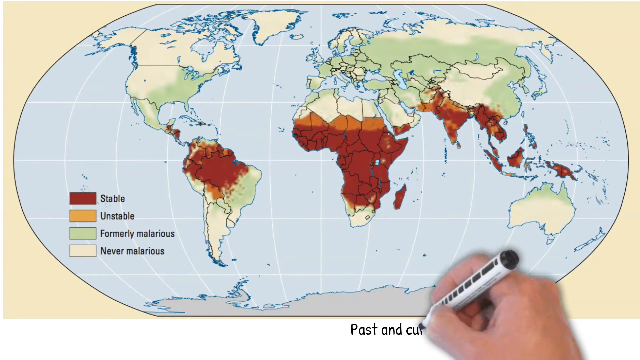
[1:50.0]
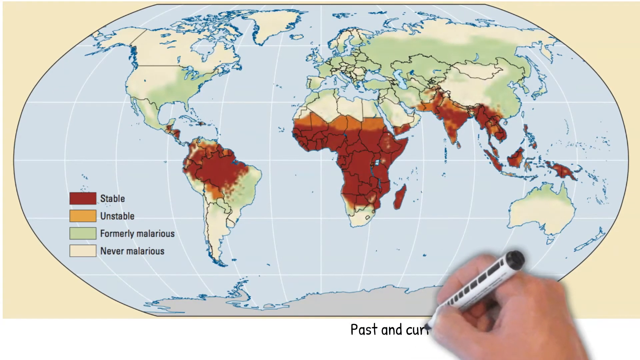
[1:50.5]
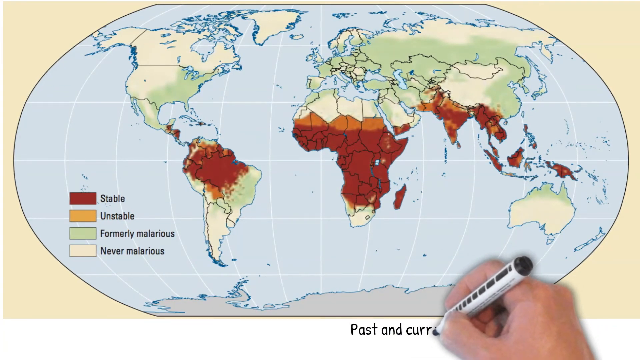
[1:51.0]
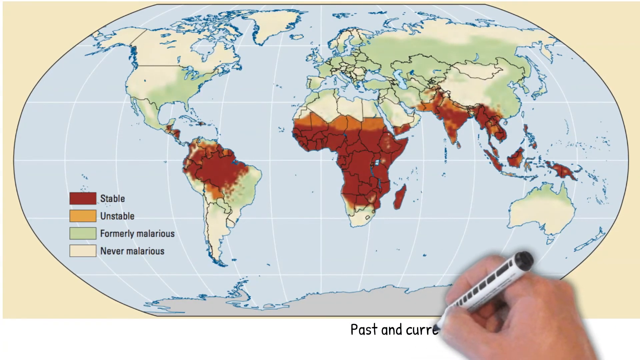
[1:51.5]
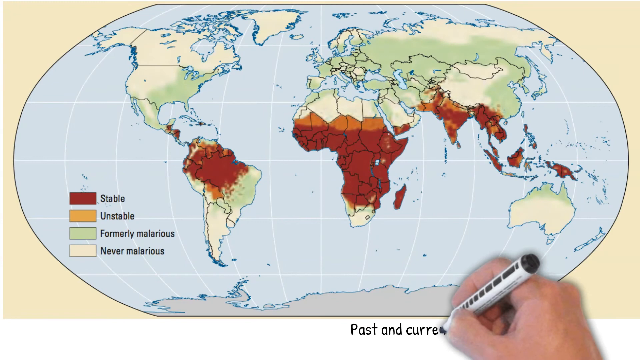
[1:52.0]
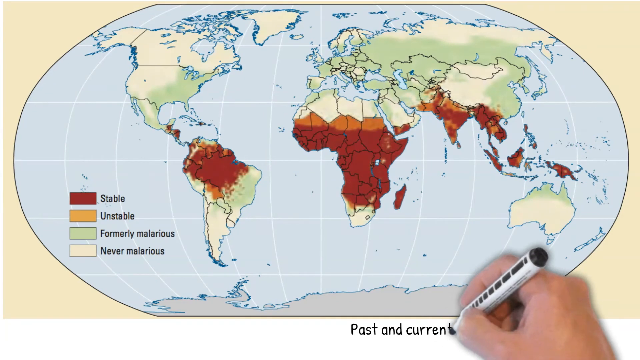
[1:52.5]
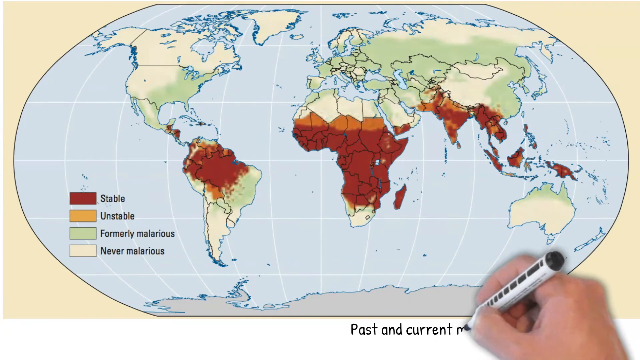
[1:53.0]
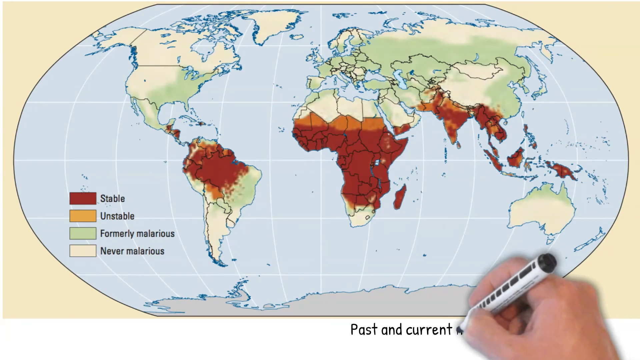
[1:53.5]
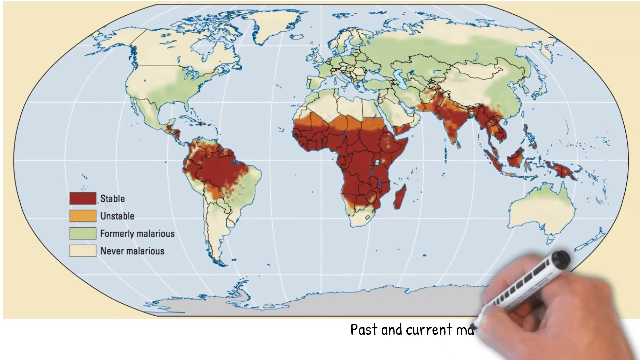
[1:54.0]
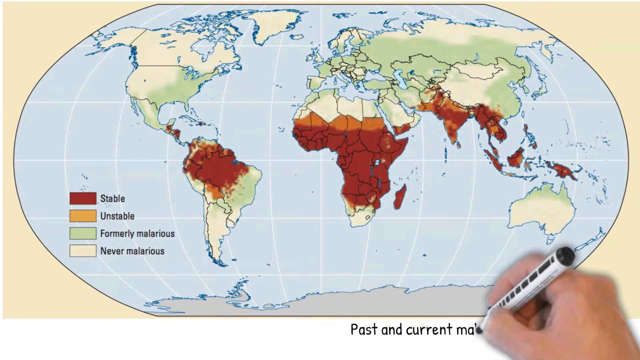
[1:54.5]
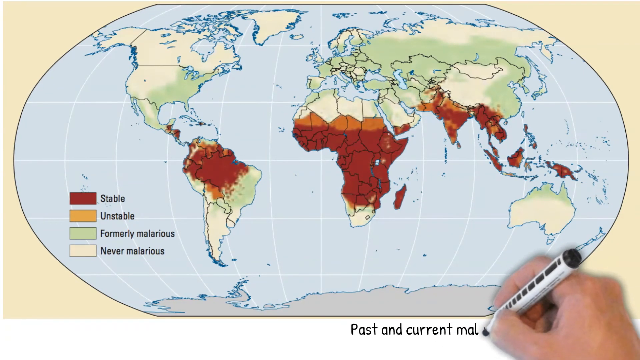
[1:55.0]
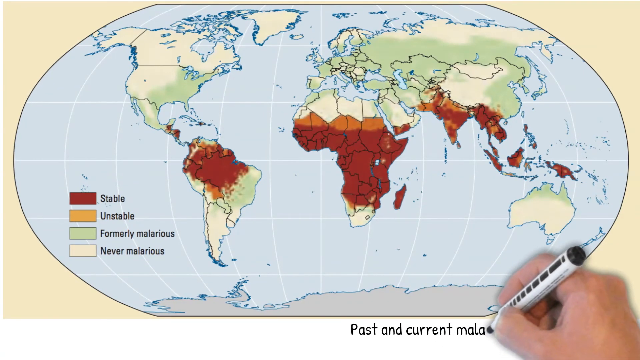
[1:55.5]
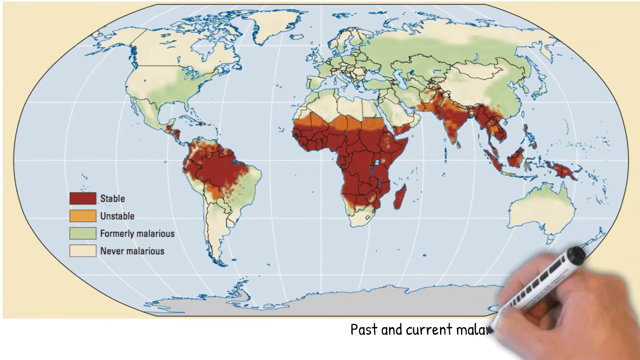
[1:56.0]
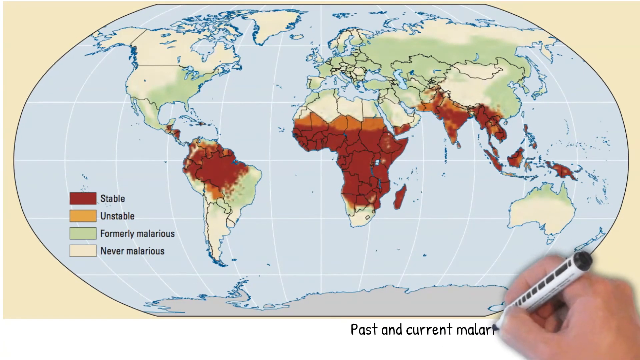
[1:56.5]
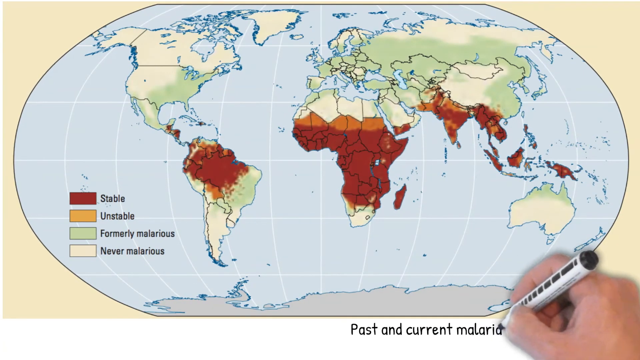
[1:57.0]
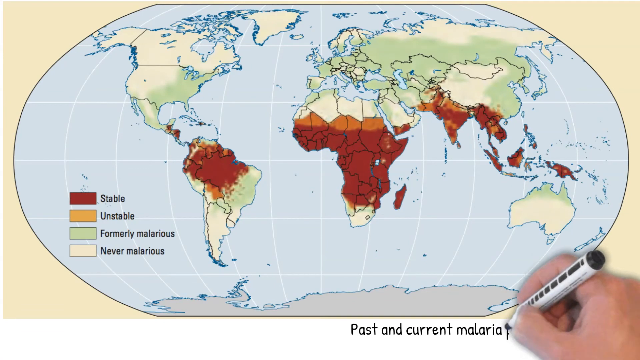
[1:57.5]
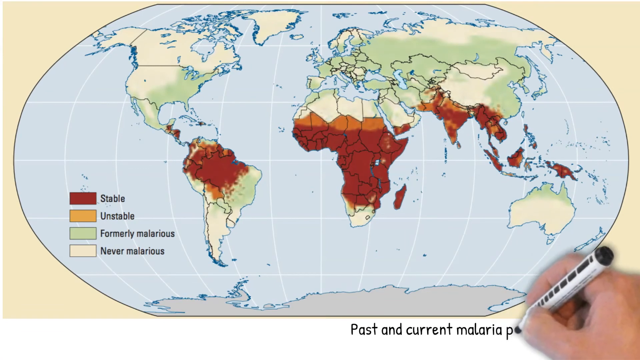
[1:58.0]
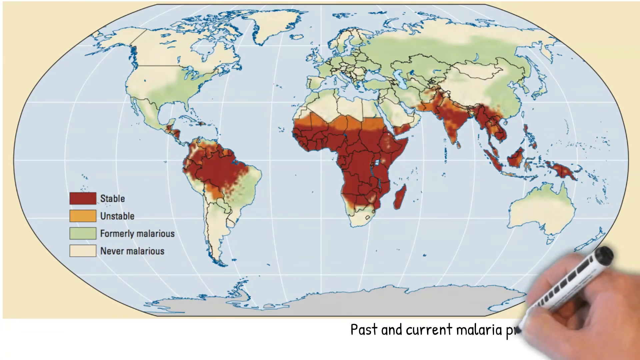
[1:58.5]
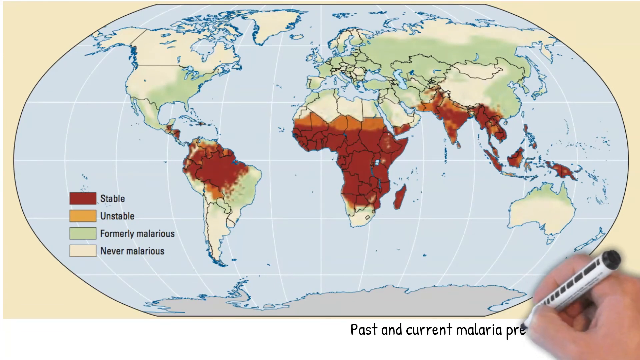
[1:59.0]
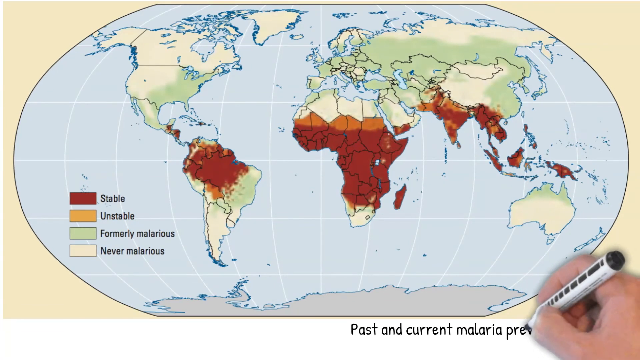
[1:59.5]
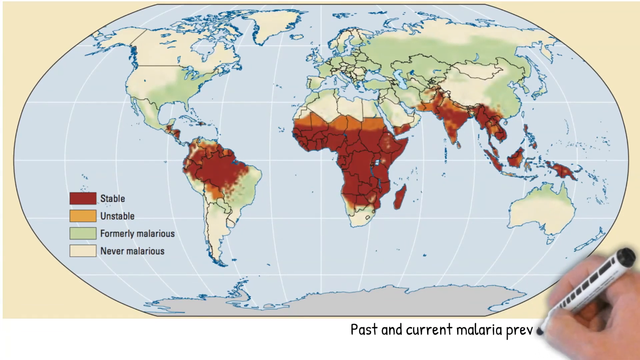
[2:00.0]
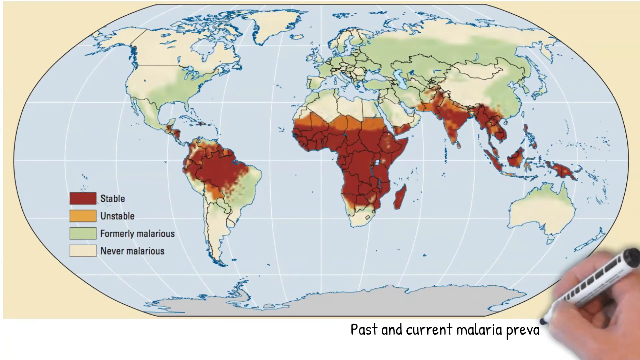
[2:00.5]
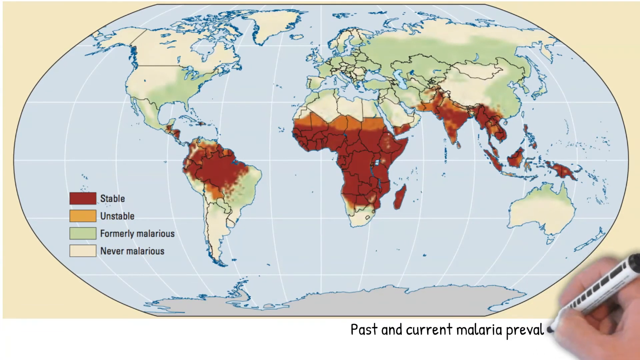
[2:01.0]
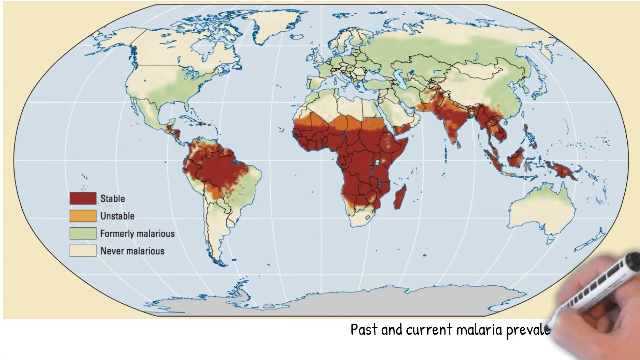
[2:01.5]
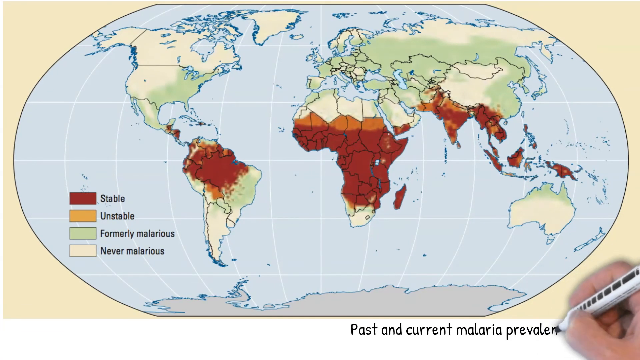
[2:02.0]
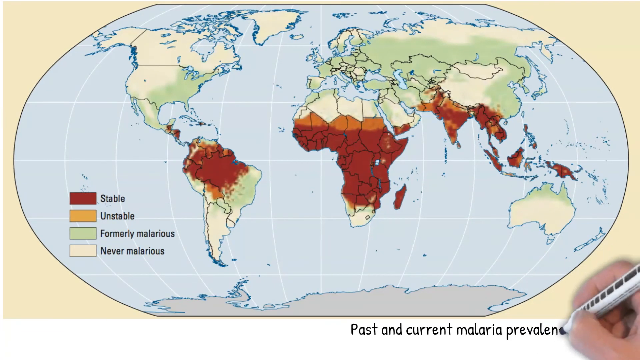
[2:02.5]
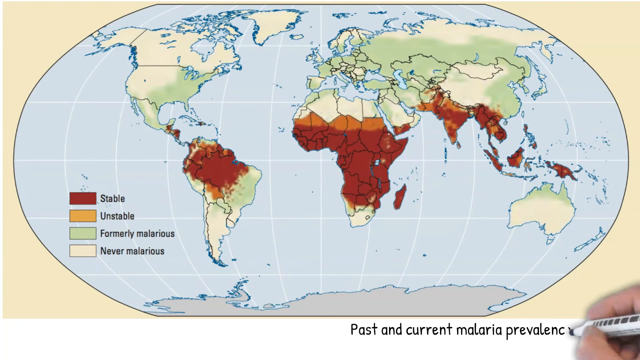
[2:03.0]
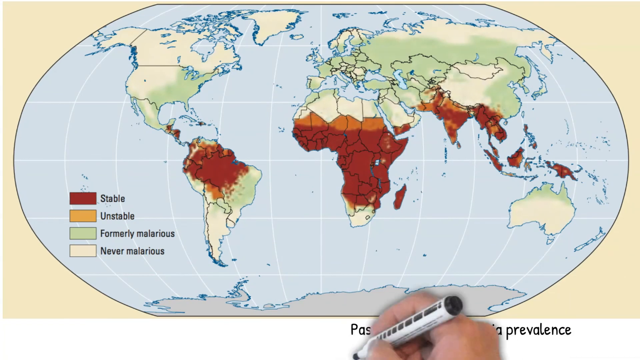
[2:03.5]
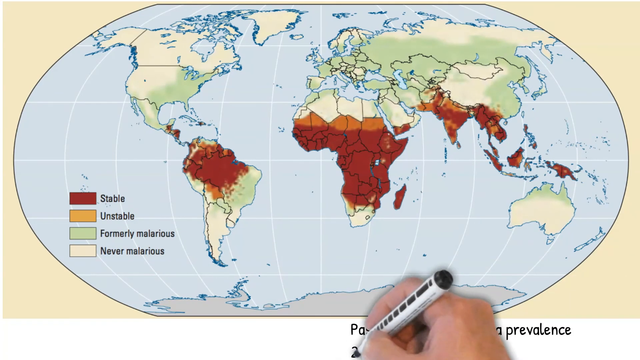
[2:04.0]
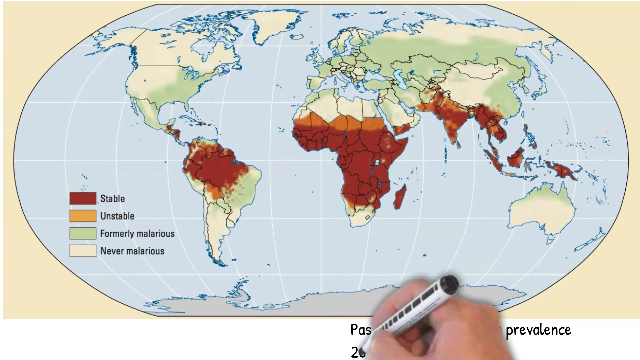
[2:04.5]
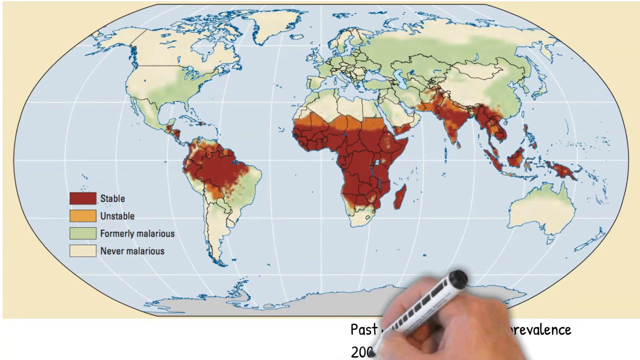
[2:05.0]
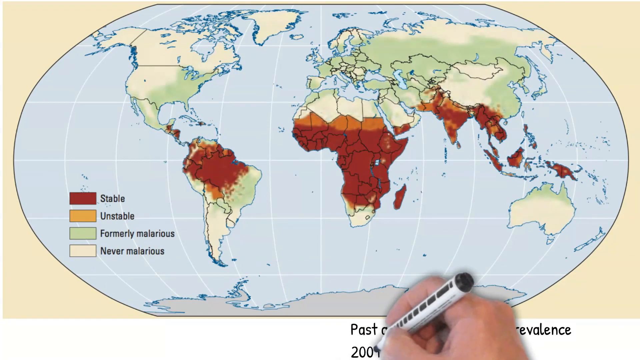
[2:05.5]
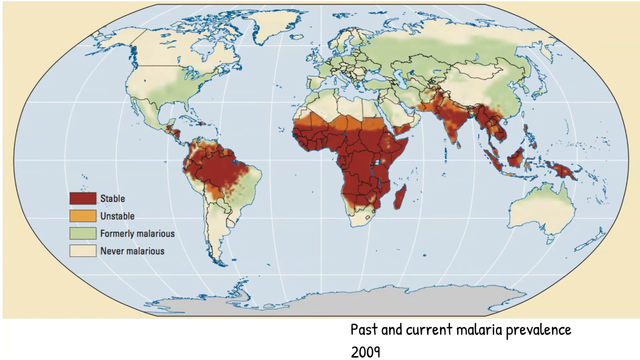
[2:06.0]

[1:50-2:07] A poster of a whole world map is shown, with a pale yellow background; it almost looks like a poster seen in a school. Countries are highlighted in different colours according to their malaria status: towards the northern hemisphere they are mainly yellow and green, and towards the southern hemisphere they are red and orange. A key to the left of the map reads "red is stable, orange is unstable, green is formerly malarious and yellow is never malarious". A hand holding a marker pen, animated to appear as though writing, writes a caption underneath the map reading "past and current malaria prevalence 2009".